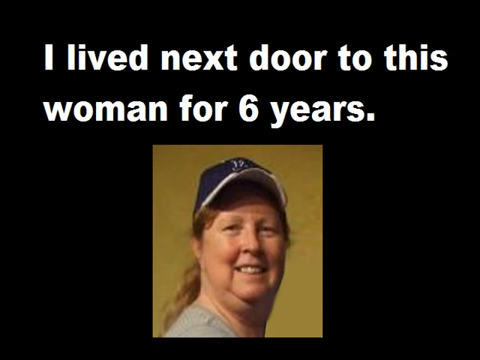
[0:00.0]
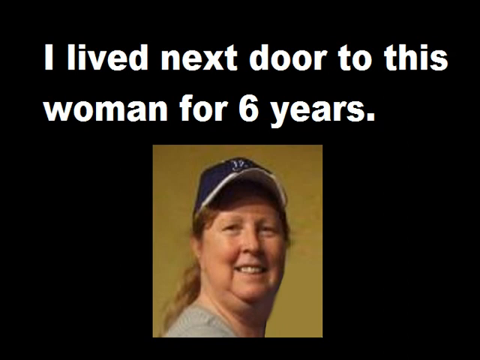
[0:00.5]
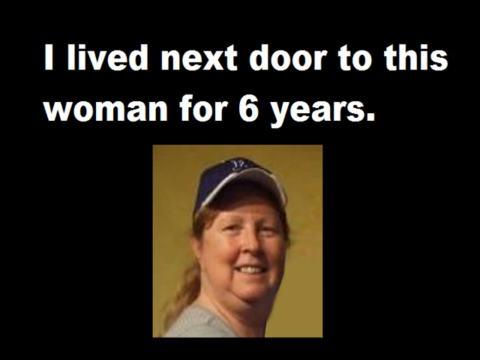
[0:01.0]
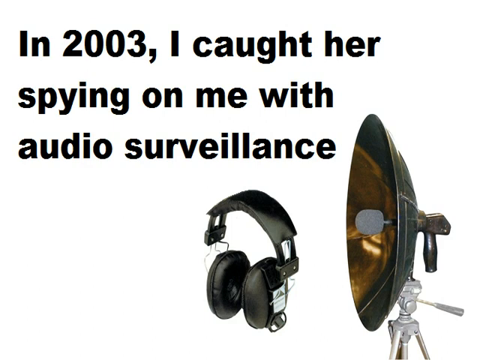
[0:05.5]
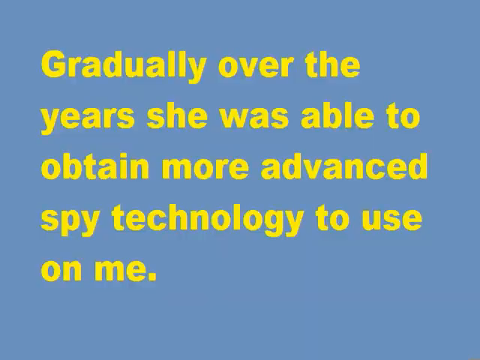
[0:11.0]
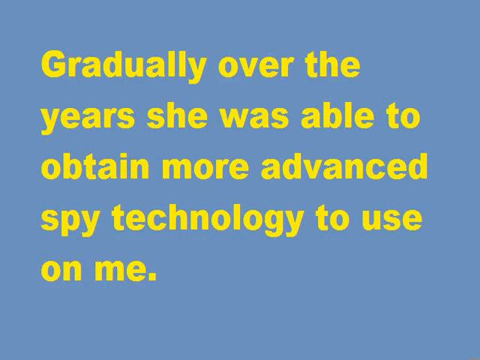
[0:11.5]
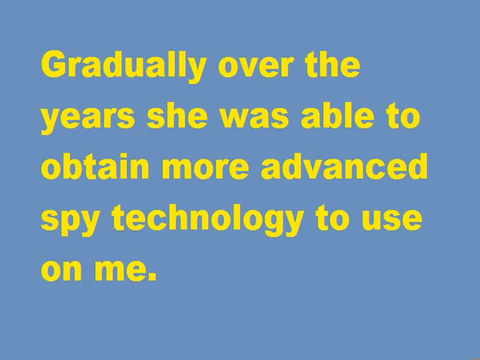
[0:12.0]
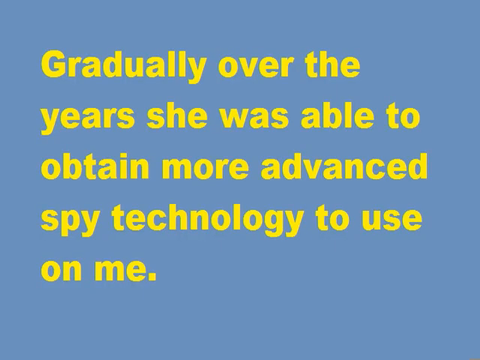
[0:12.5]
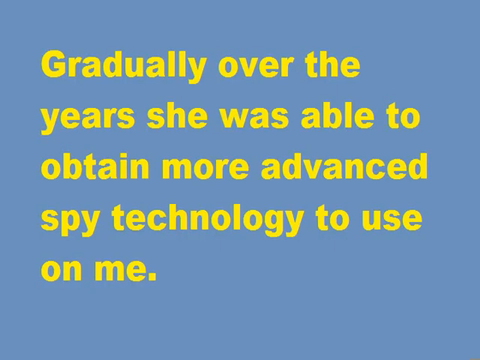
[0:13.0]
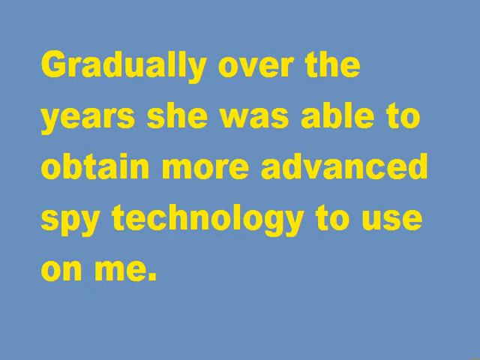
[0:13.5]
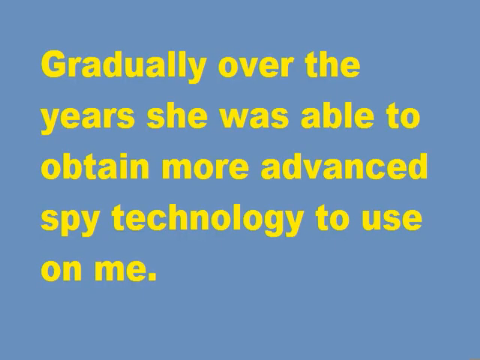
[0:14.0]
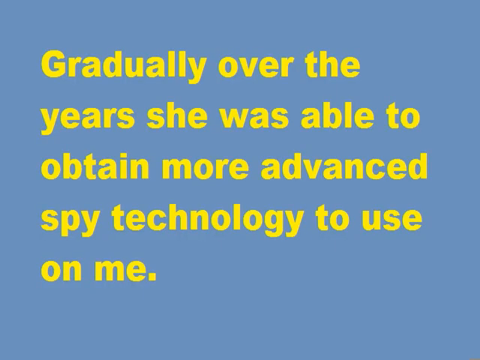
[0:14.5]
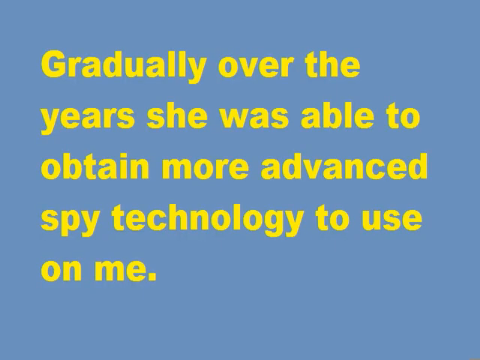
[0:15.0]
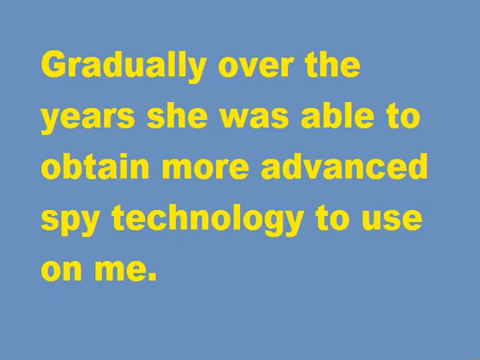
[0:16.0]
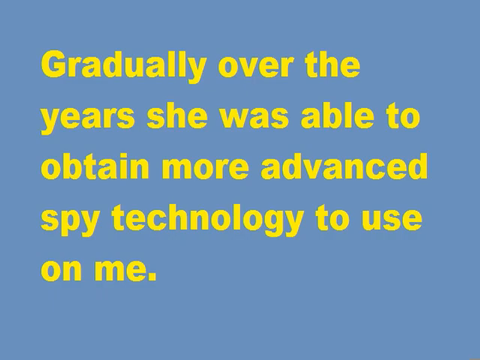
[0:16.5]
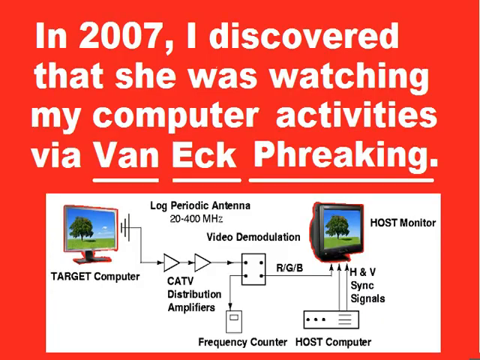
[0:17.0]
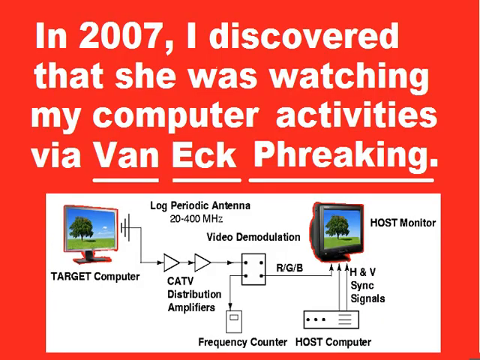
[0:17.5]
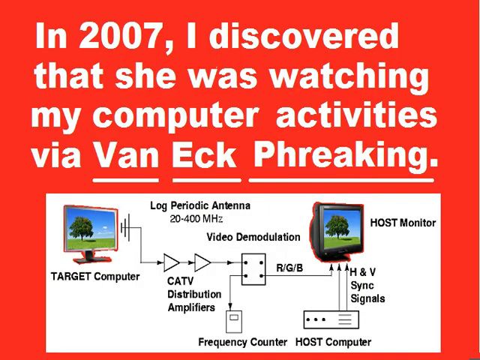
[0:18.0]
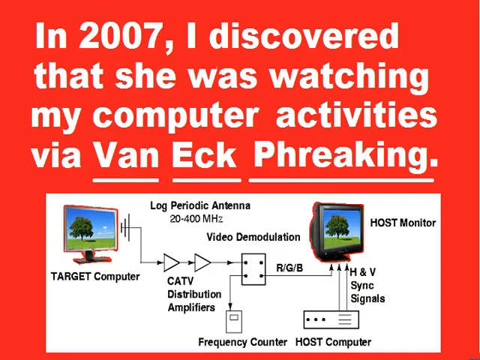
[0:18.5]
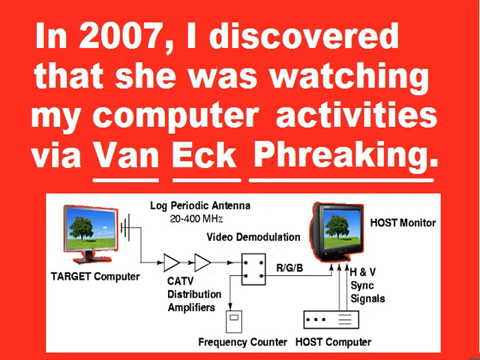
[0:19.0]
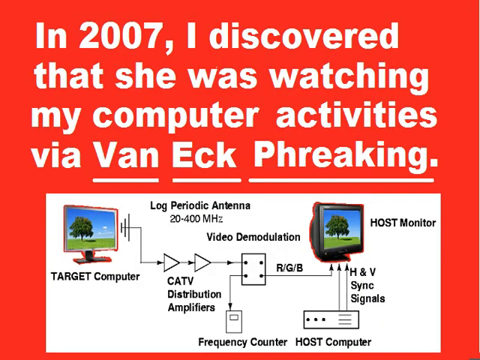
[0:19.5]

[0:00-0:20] An image shows a white woman with a cap against a brown background, with text that reads "I lived next door to this woman for six years." The next image shows a headphone with a satellite dish and text that reads "In 2003, I caught her spying on me." Another image shows yellow text on a blue background that reads "gradually over the years she was able to obtain more advanced spy technology to use on me."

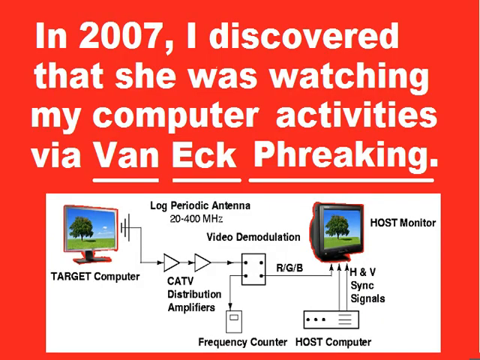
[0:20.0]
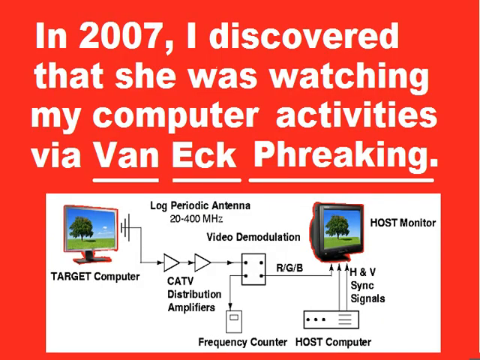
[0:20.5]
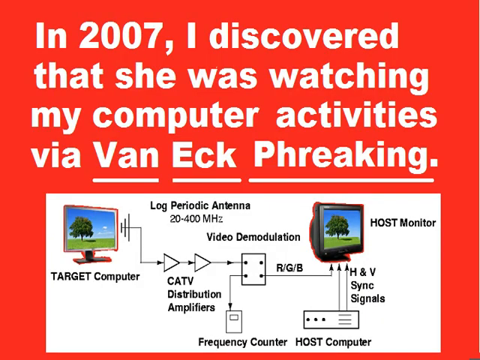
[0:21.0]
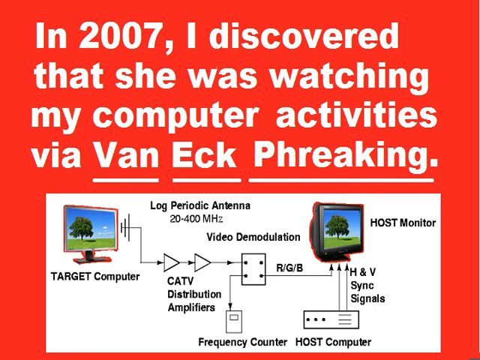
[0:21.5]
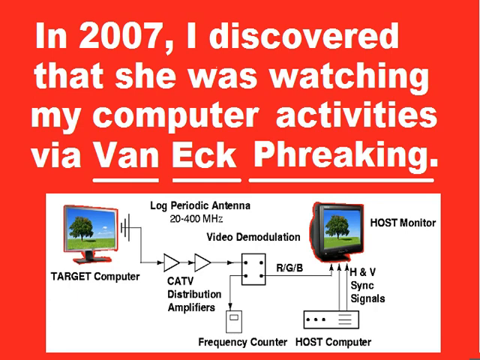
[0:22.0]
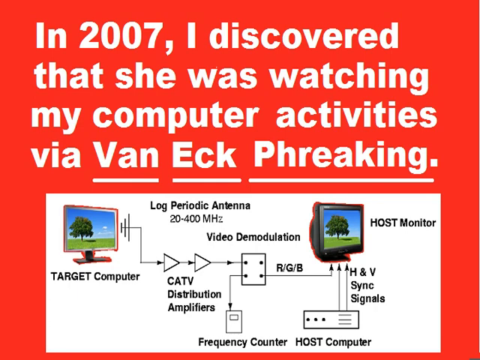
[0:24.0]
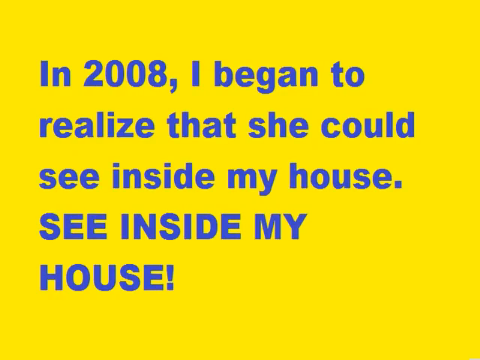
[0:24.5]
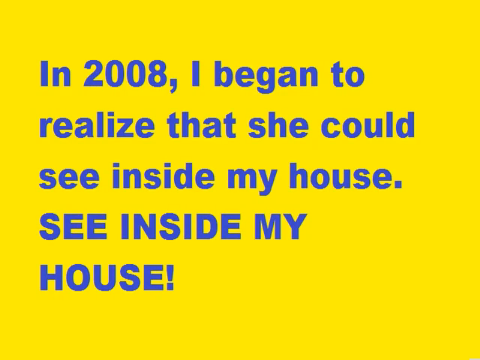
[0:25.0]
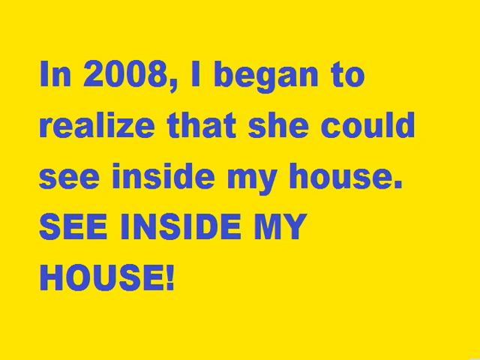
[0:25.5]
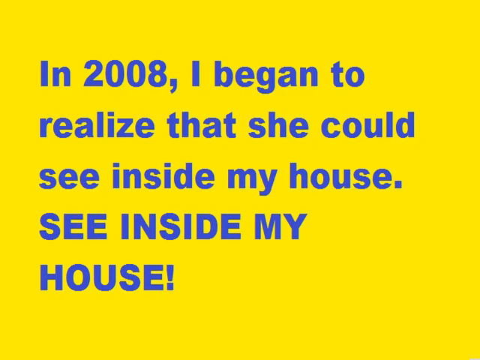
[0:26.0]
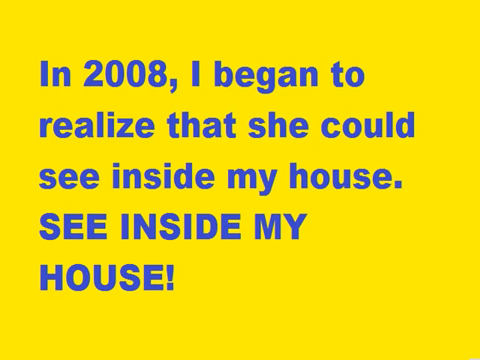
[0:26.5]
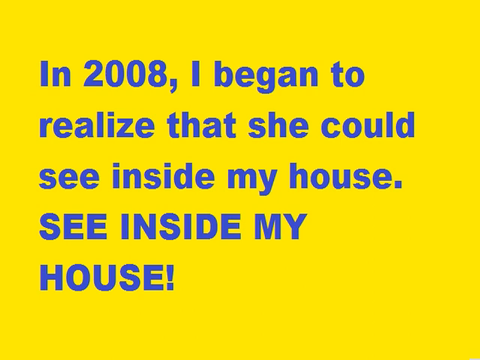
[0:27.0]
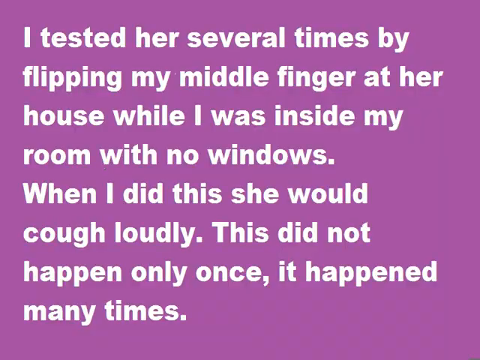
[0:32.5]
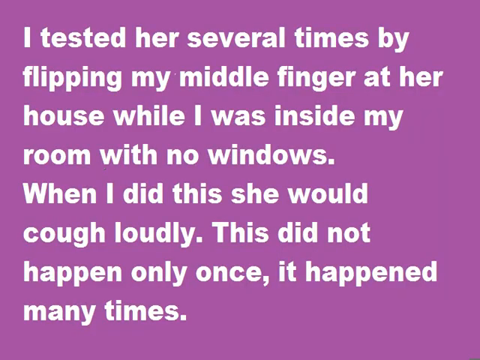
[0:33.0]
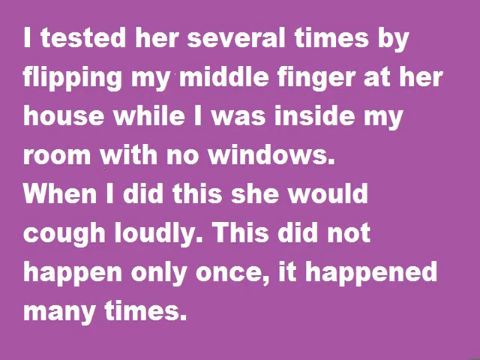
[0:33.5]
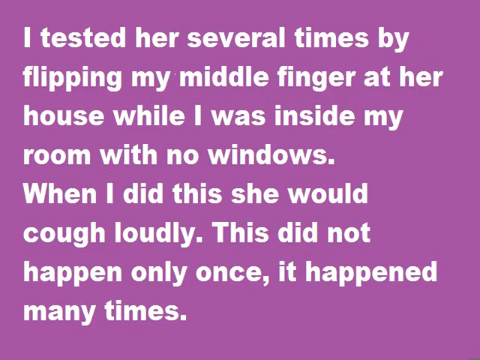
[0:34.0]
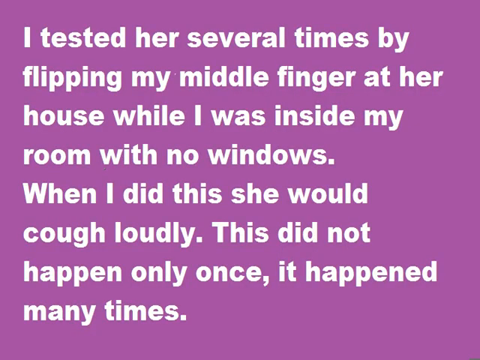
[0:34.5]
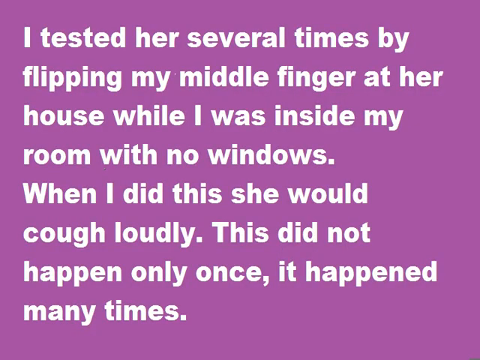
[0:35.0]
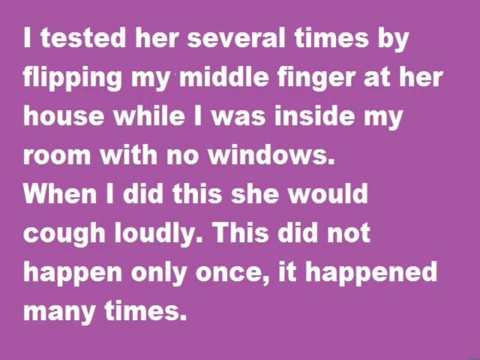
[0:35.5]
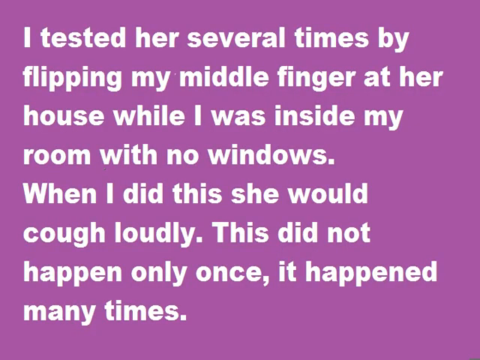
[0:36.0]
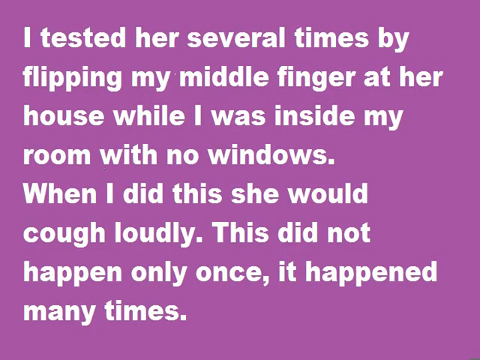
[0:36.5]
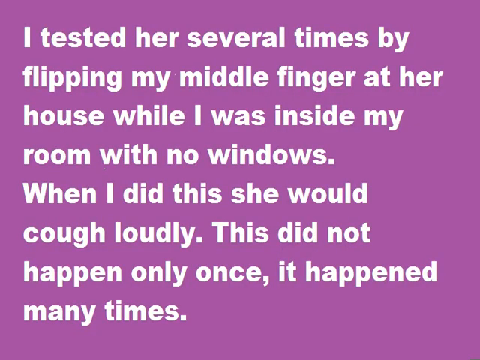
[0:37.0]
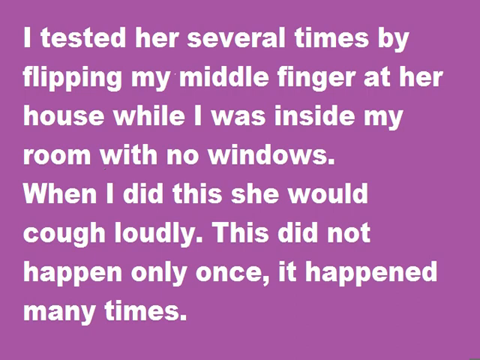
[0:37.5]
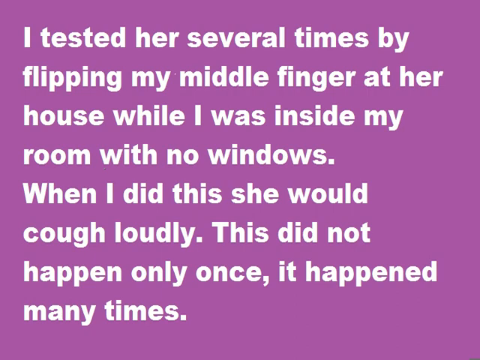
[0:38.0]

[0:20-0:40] The slideshow continues with text that begins "in 2007, I discovered that she was watching my computer activities," shown with an image of a monitor tracking a target computer on a red background. The next image shows blue text on a yellow background that reads "in 2008 I began to realize that she could see inside my house," with "see inside my house" in capital letters with an exclamation mark. Next comes white text on a purple background that includes "When I did this, she would cough loudly."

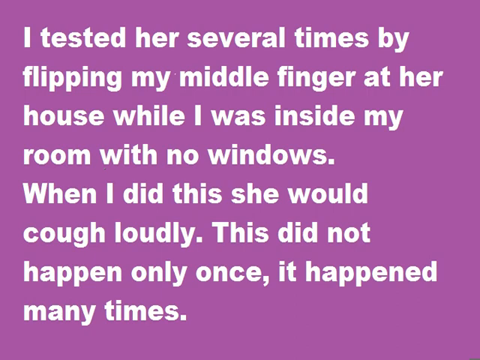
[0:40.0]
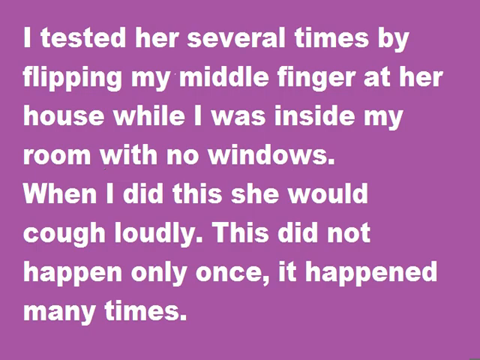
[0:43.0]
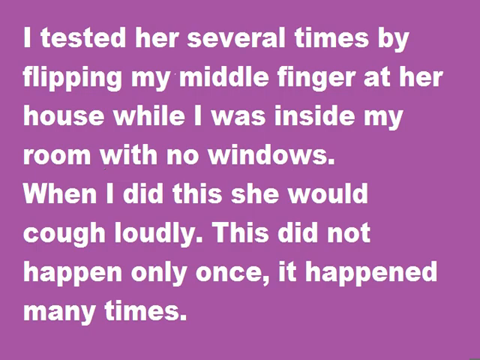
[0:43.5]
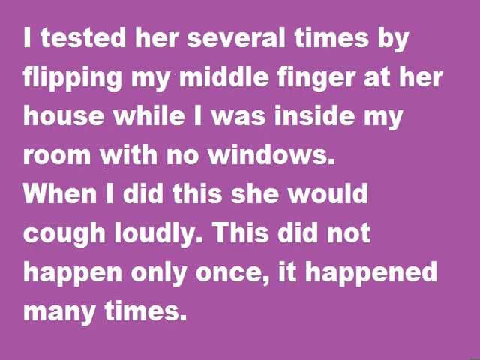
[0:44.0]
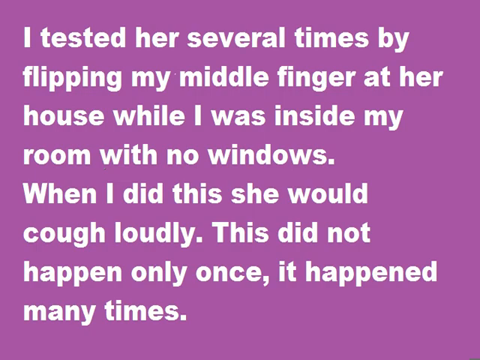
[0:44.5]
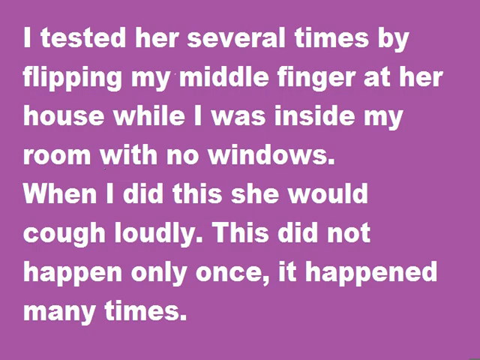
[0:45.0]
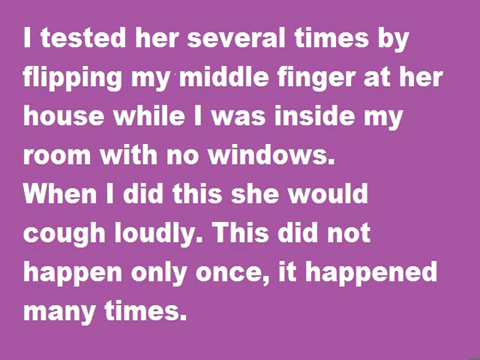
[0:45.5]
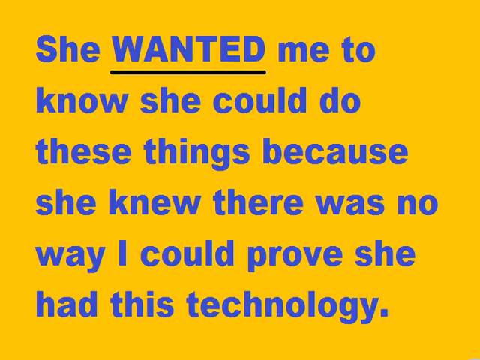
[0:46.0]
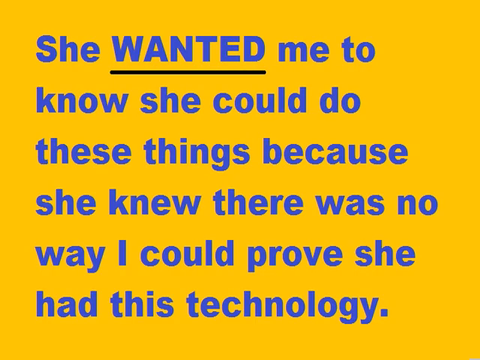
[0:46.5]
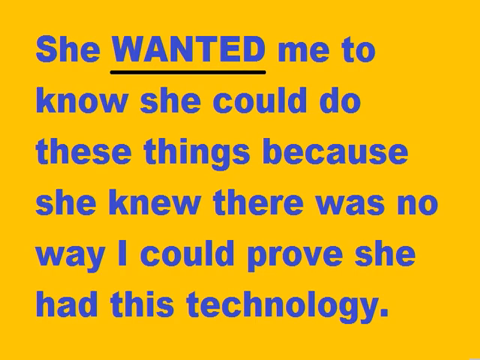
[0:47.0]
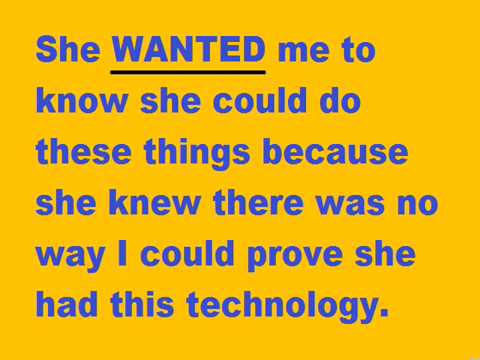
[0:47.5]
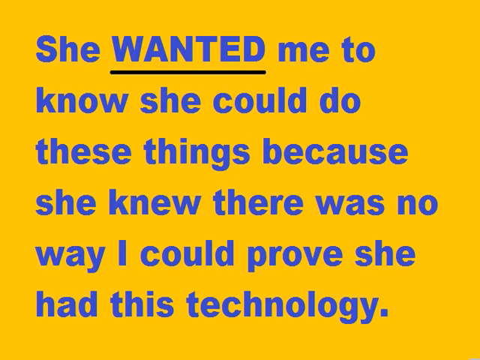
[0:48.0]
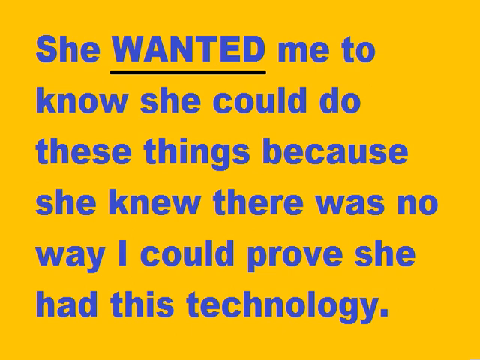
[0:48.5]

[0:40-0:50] An image shows blue text that reads "she wanted me to know she could do these things because she knew there was no way."